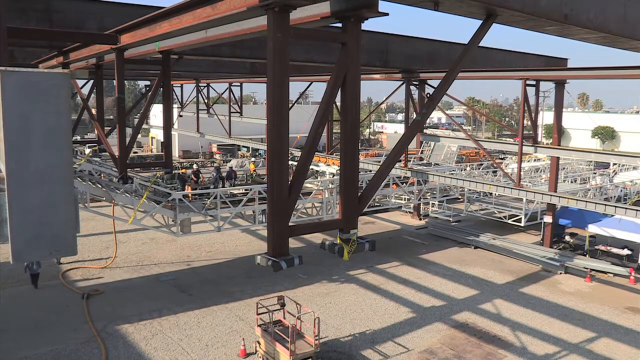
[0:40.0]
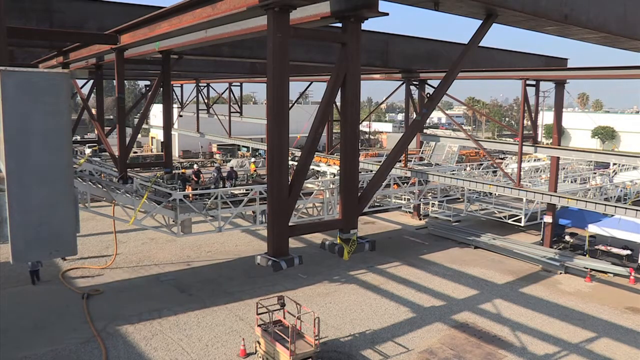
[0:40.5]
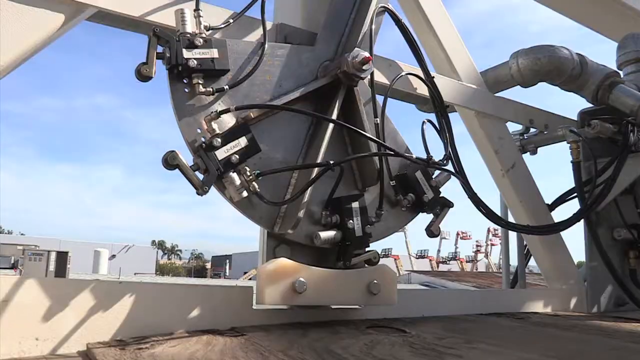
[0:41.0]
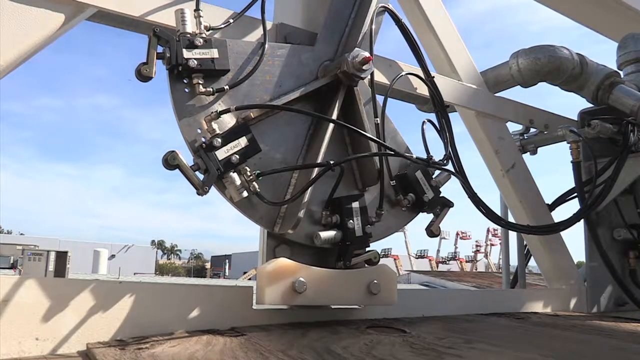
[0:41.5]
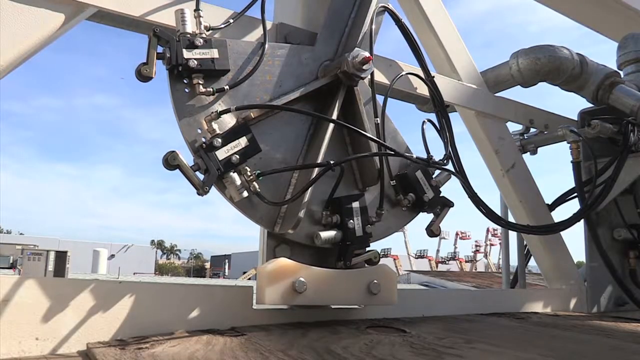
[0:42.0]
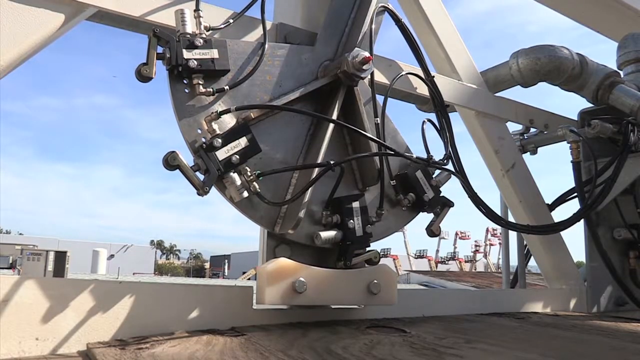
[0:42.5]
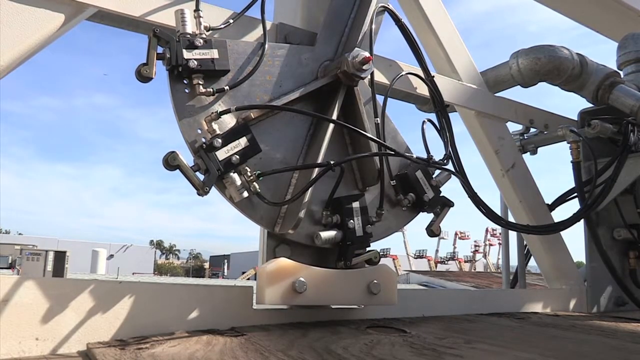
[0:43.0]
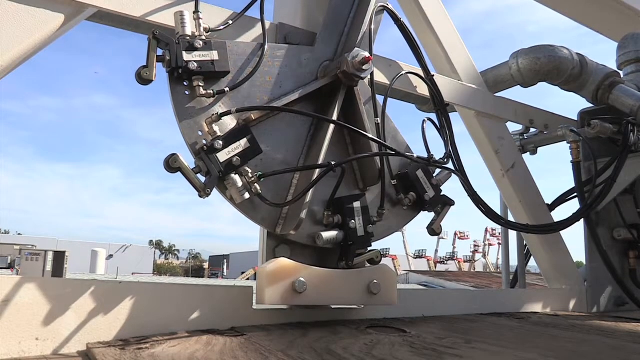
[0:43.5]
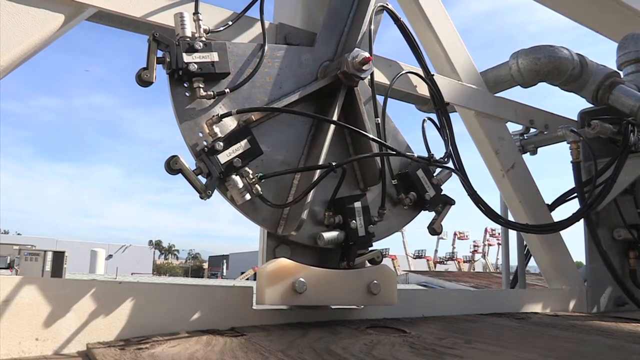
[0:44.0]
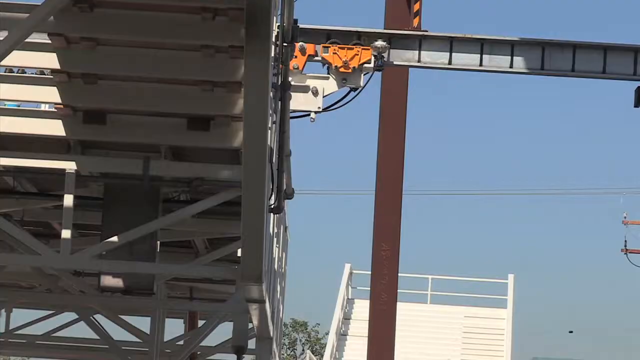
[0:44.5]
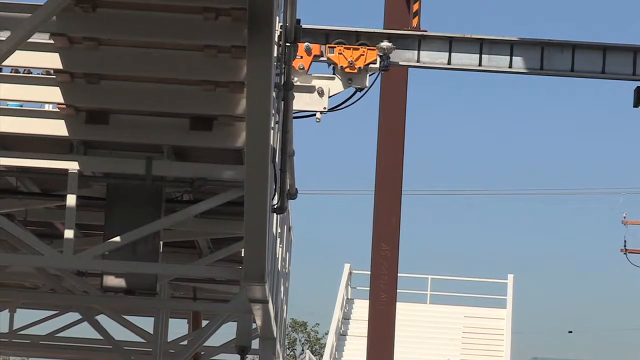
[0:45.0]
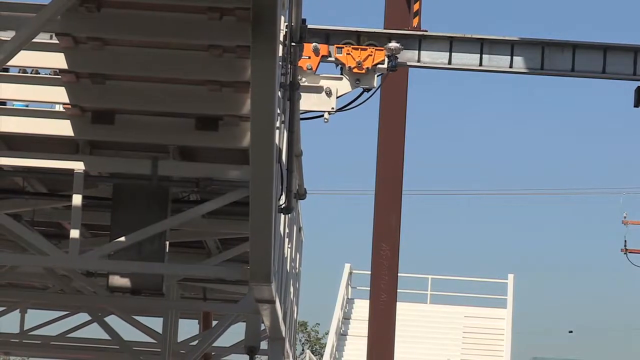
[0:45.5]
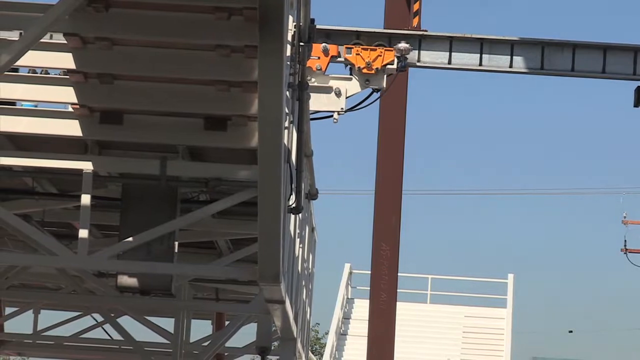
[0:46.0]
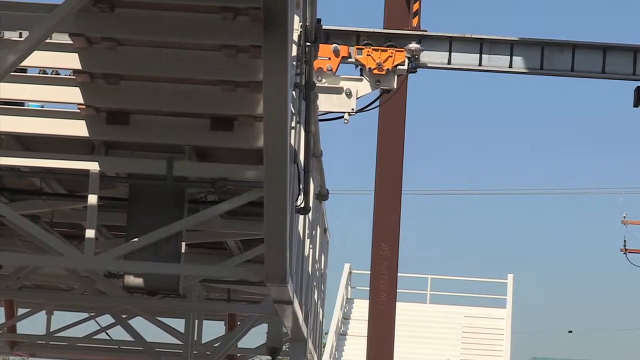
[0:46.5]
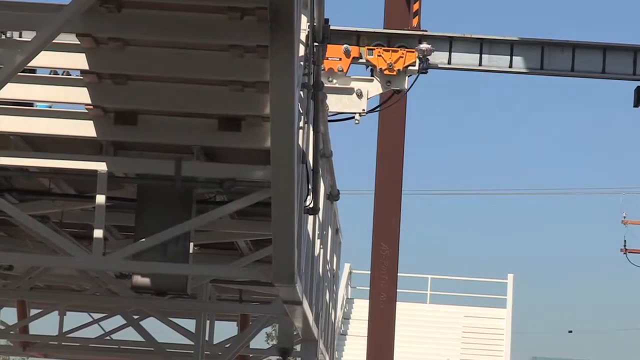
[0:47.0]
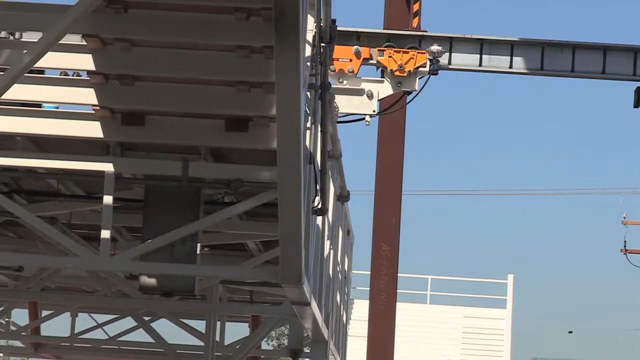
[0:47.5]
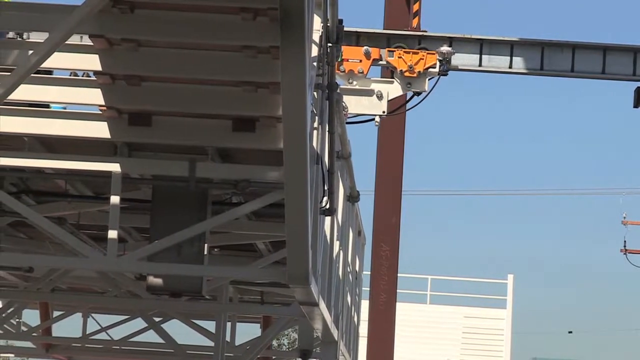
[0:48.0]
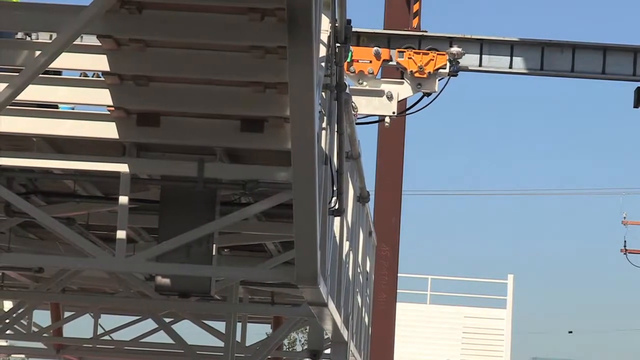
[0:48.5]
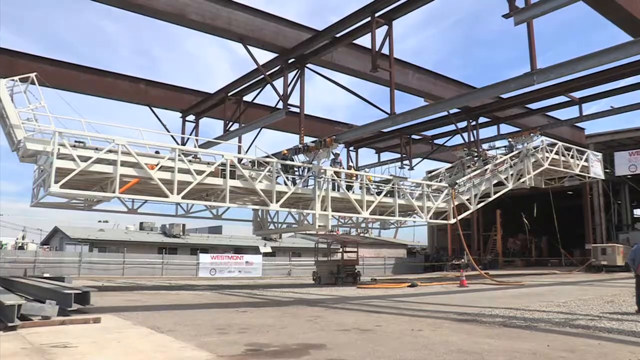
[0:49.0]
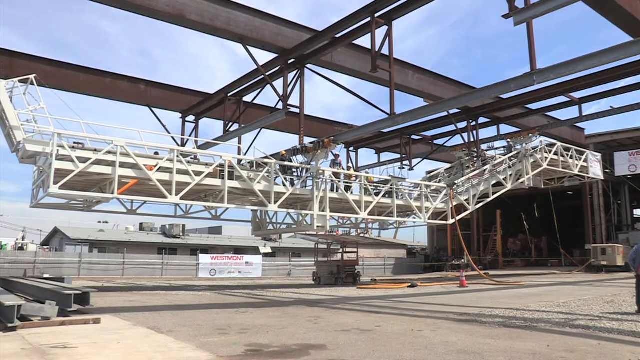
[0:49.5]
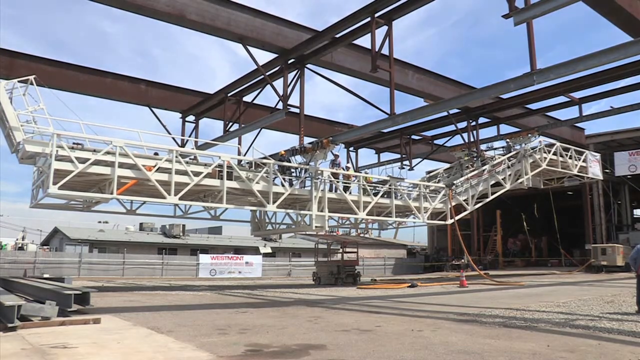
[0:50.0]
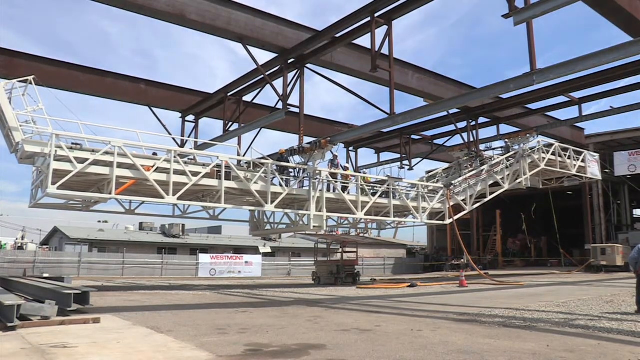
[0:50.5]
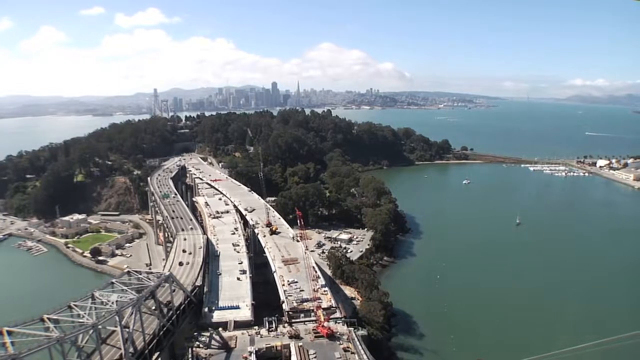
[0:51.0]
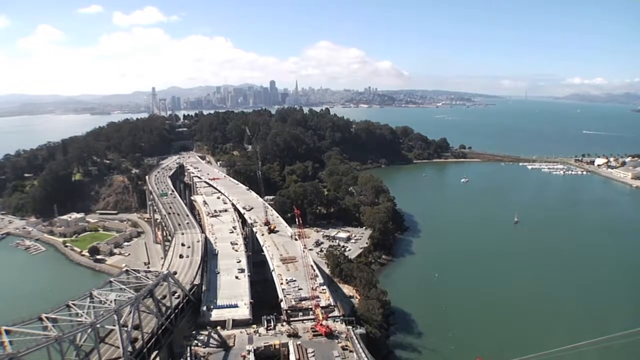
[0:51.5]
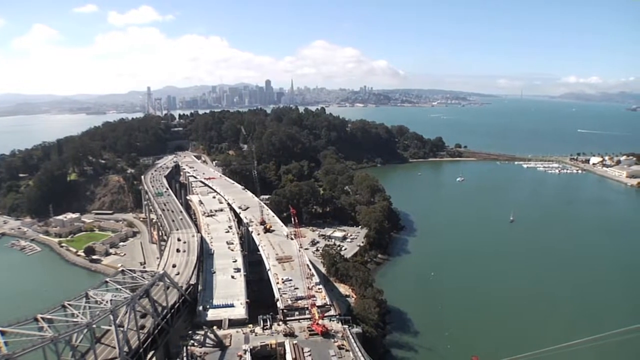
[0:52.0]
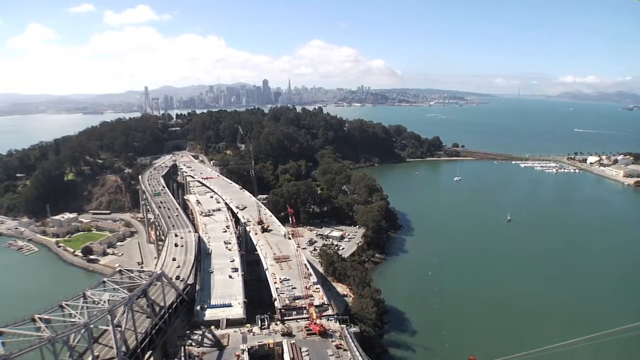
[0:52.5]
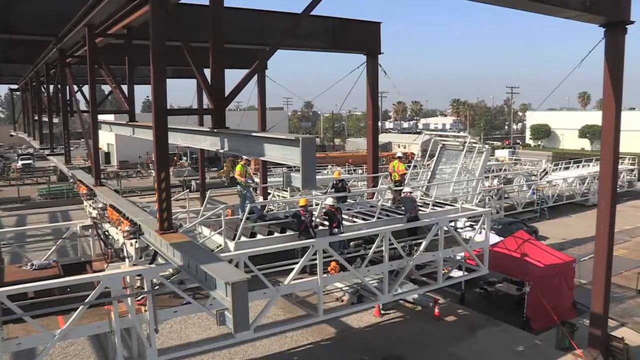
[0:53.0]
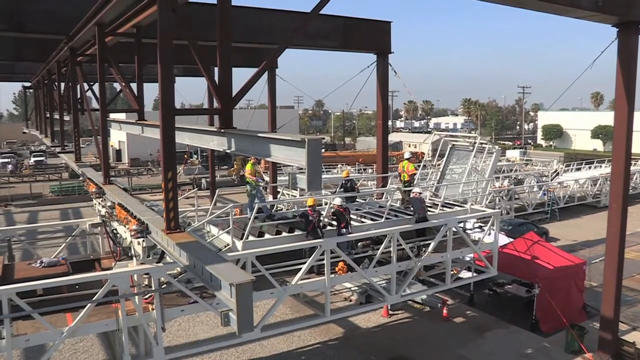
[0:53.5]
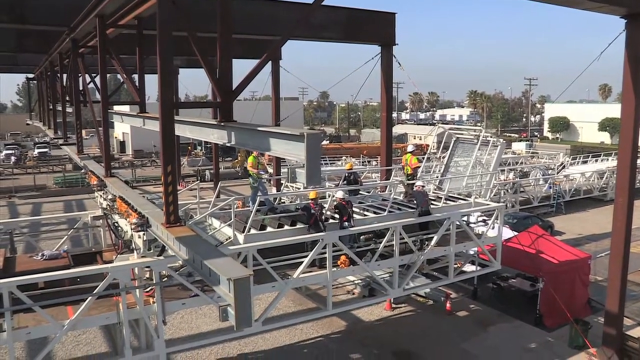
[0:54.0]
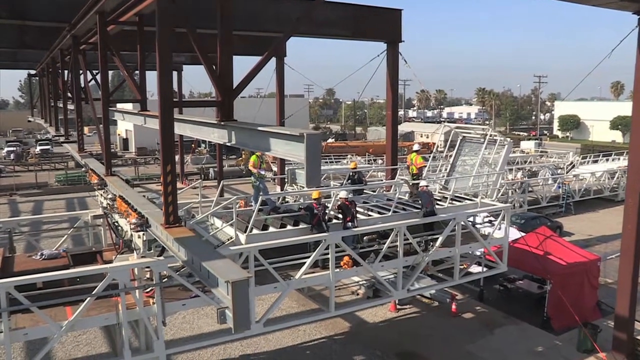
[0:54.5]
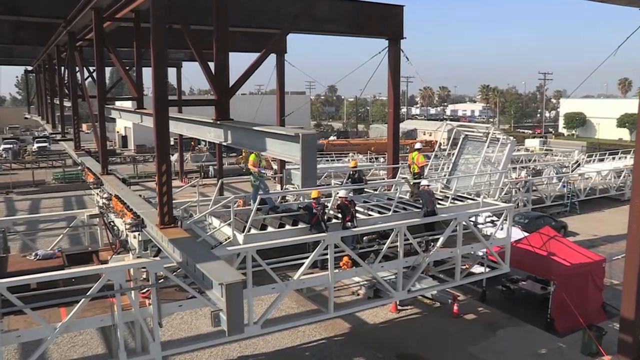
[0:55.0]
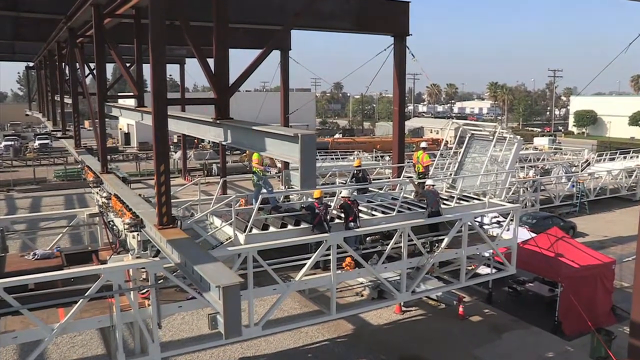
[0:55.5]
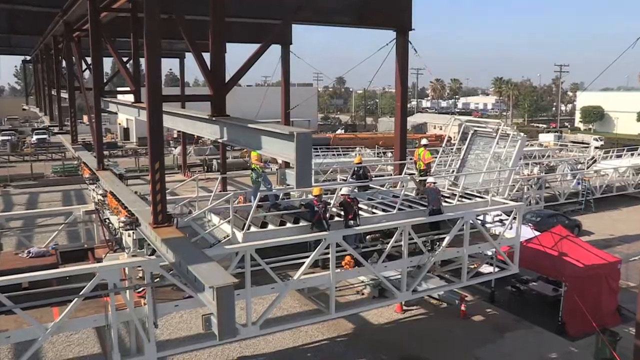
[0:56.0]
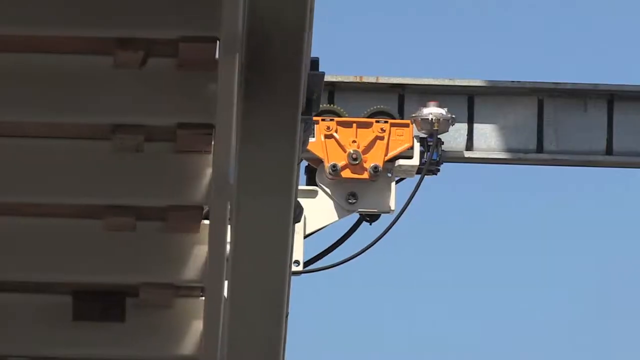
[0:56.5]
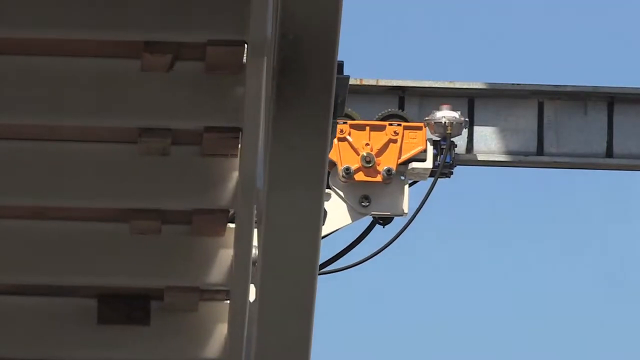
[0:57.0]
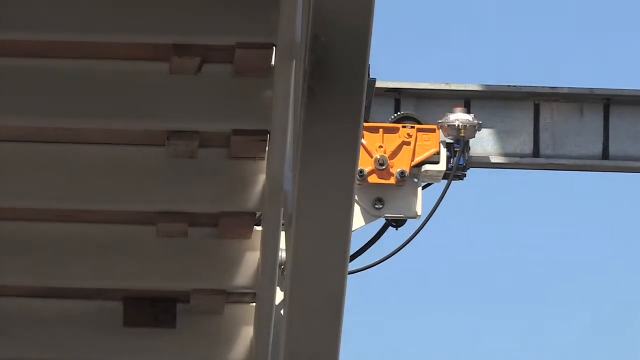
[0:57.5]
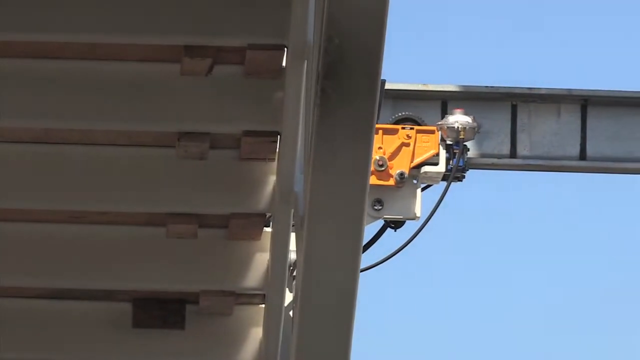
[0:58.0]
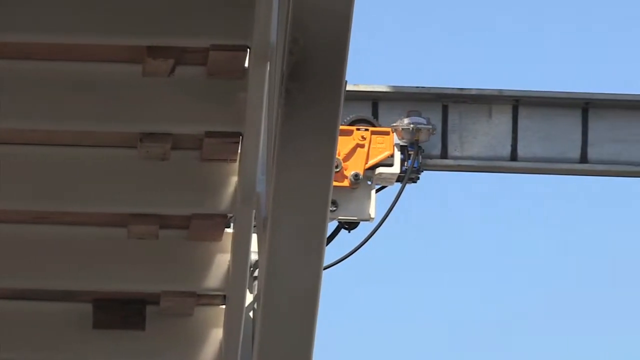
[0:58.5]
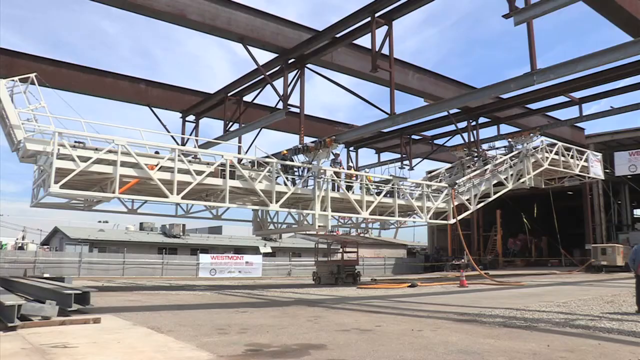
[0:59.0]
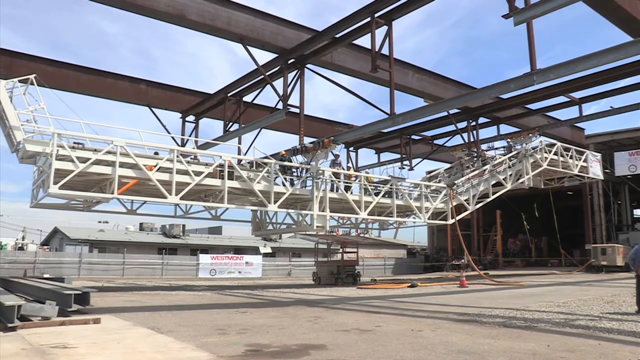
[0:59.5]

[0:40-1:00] Men work with different beams and gray parts. The scene transitions to another machine, gray and silver, that looks connected to white beams and gray pipes, and it slowly moves. The scene switches to a huge, crane-type machine moving slowly across the beam, with construction men working inside this white crane, trying to move things for their project. The view shifts to an overhead shot of a road with different cars on it. There are a lot of trees in the background, and further behind the trees, past a body of water, there appear to be skyscrapers. Greenish-blue water is on all sides of the trees and the road. There are white clouds in the sky, with blue sky above the clouds. The scene returns to the construction workers working with the white beams; several of them appear to wear yellow, or yellow and orange, greenish shirts with white hats. The camera zooms in slightly on them before switching to the machine working.